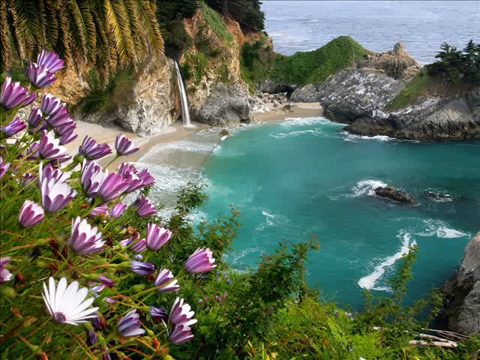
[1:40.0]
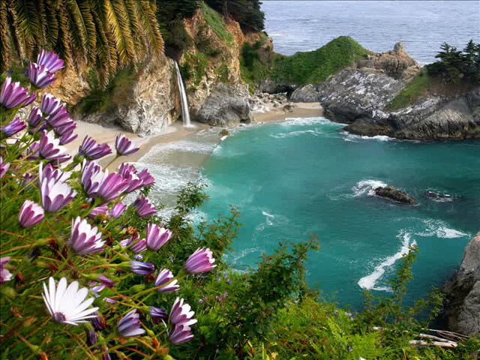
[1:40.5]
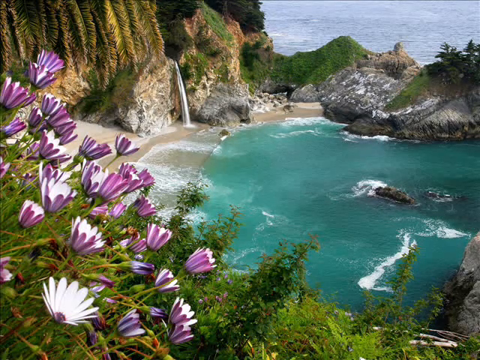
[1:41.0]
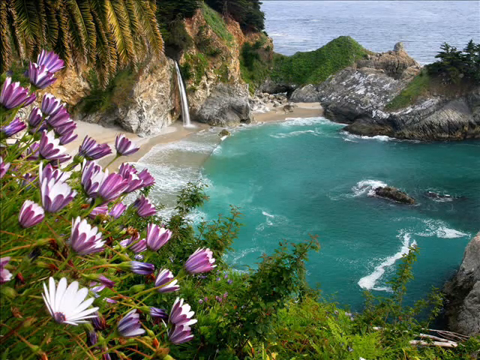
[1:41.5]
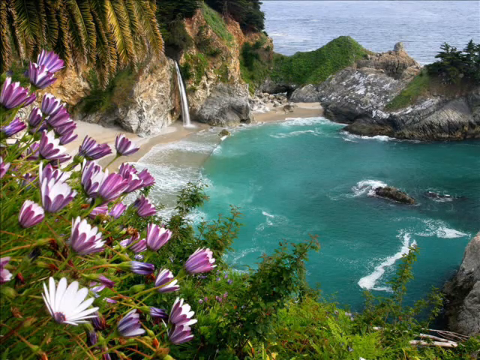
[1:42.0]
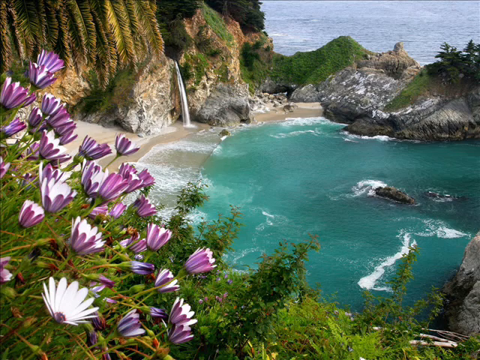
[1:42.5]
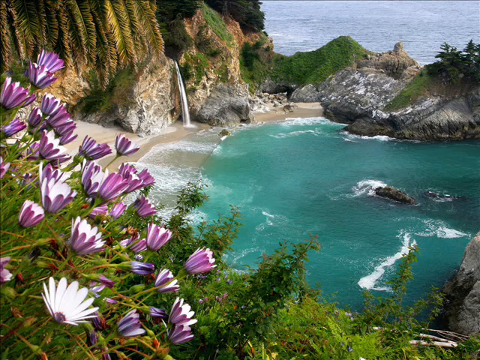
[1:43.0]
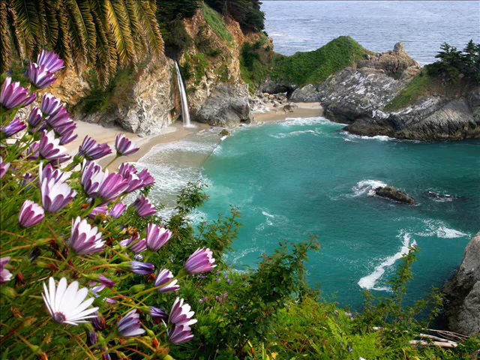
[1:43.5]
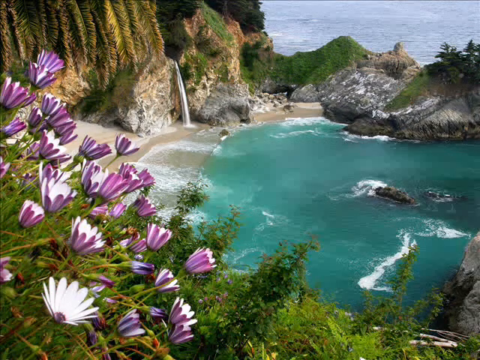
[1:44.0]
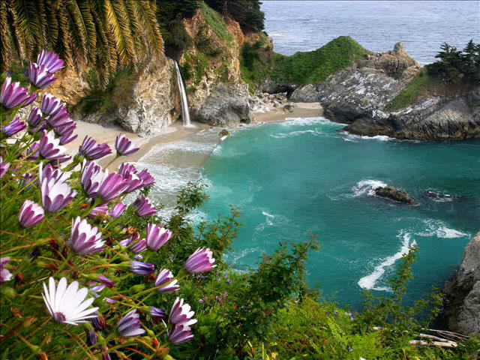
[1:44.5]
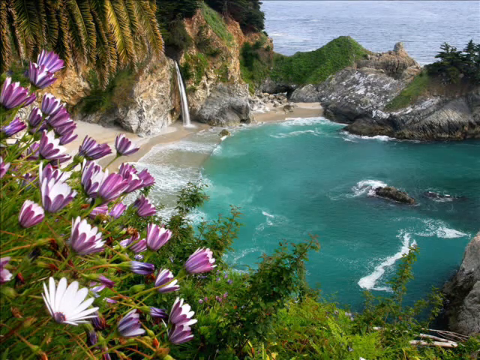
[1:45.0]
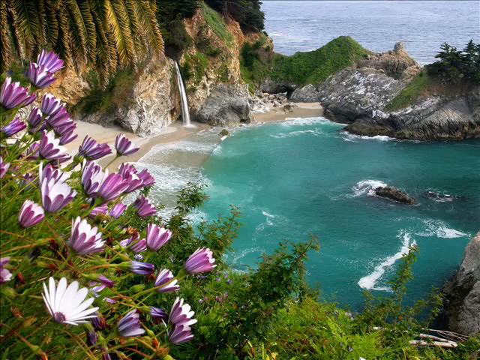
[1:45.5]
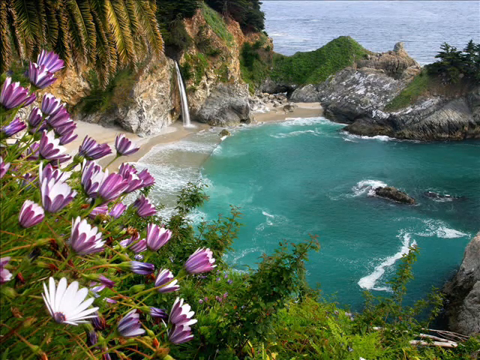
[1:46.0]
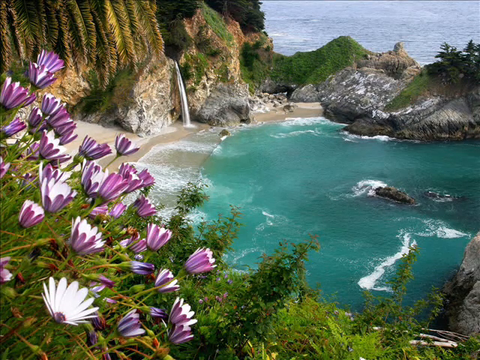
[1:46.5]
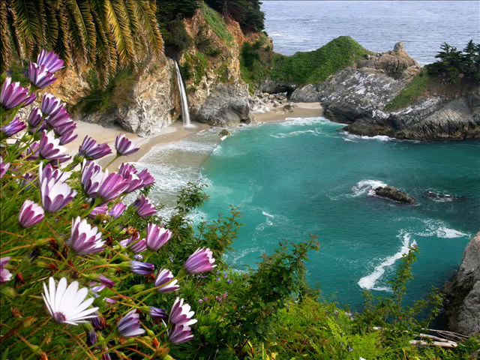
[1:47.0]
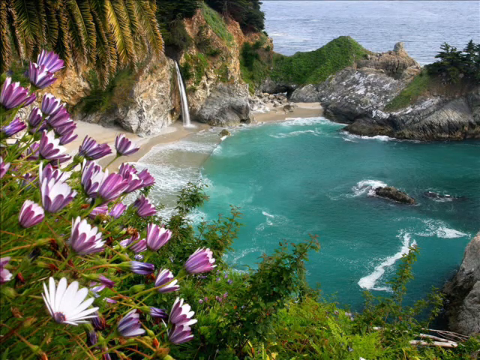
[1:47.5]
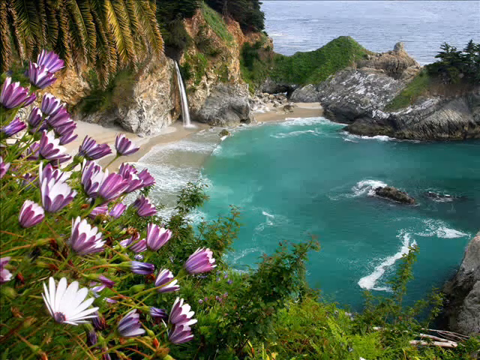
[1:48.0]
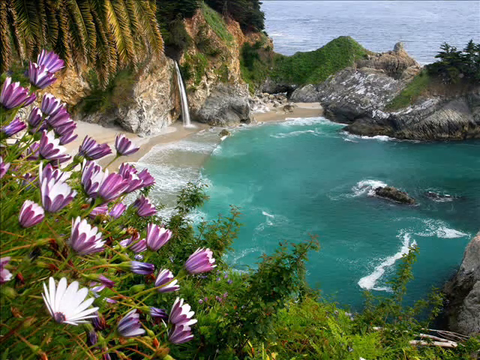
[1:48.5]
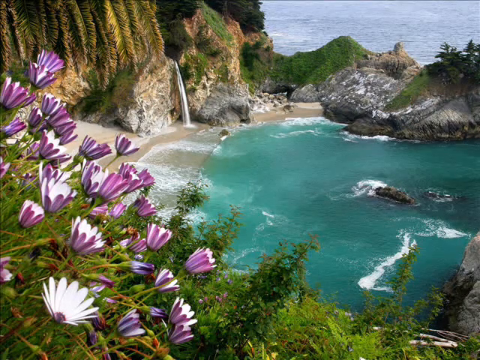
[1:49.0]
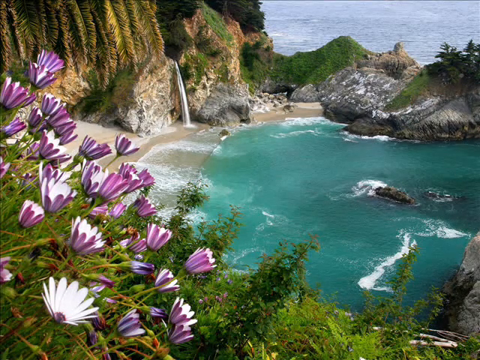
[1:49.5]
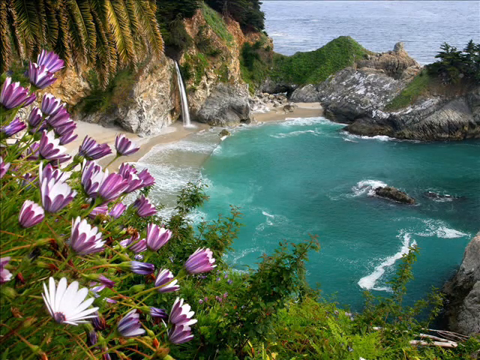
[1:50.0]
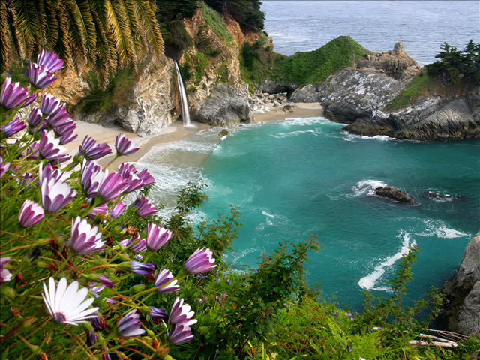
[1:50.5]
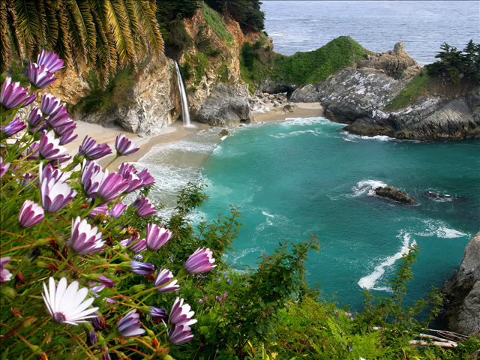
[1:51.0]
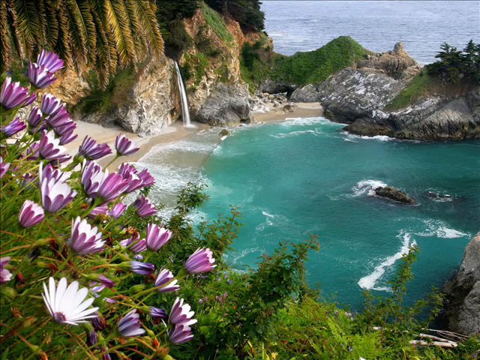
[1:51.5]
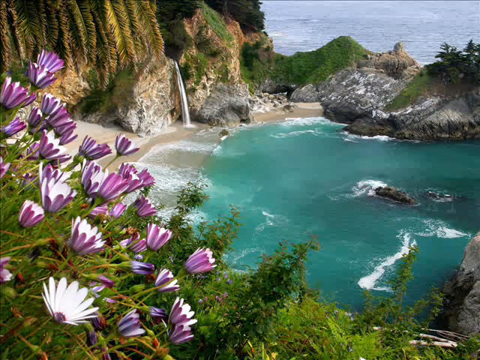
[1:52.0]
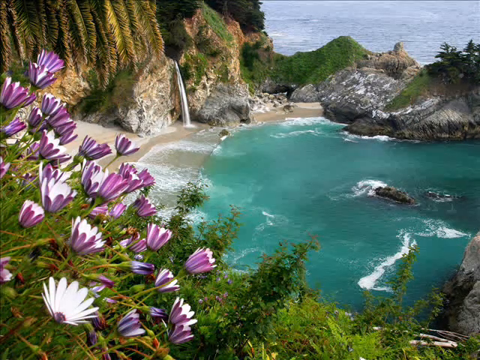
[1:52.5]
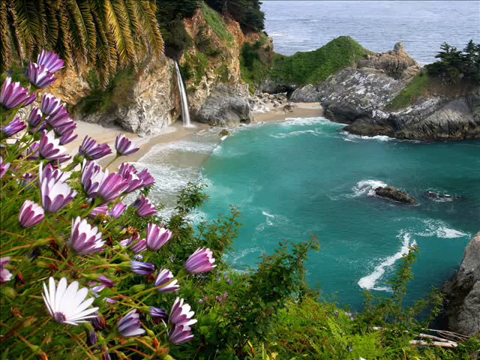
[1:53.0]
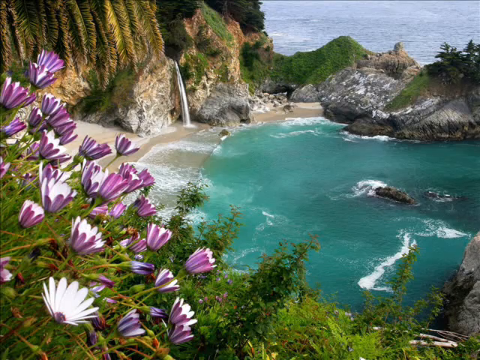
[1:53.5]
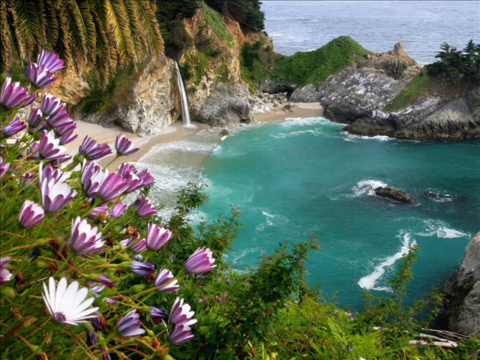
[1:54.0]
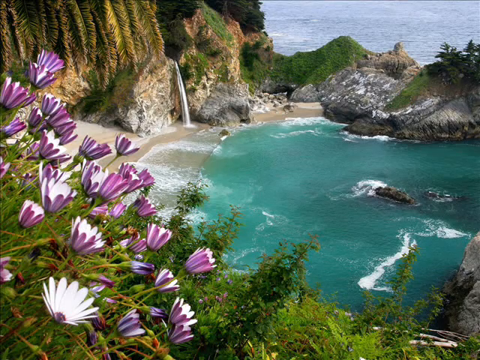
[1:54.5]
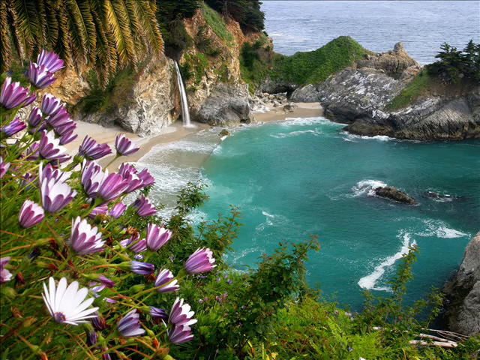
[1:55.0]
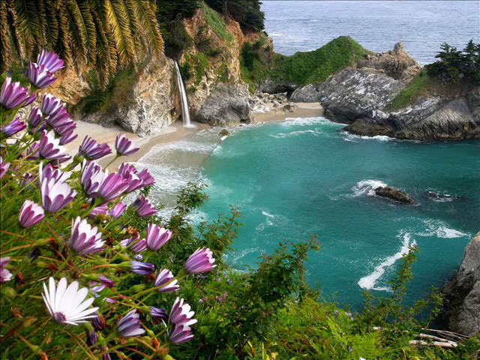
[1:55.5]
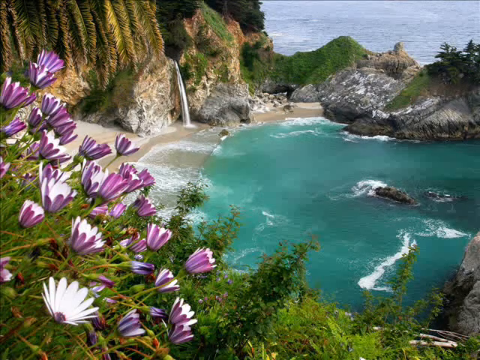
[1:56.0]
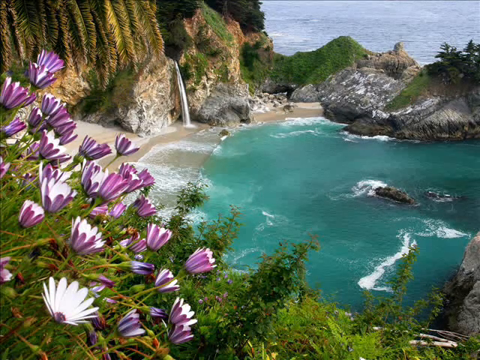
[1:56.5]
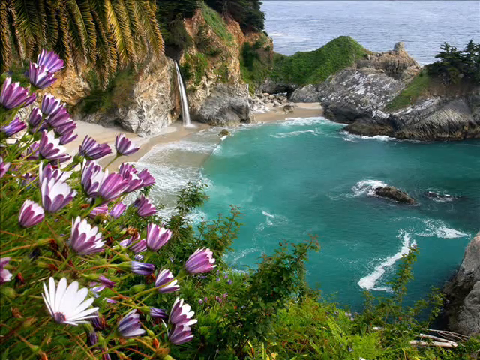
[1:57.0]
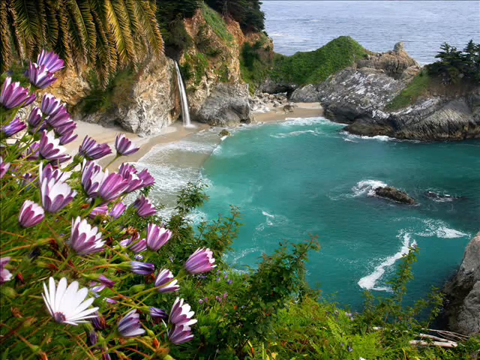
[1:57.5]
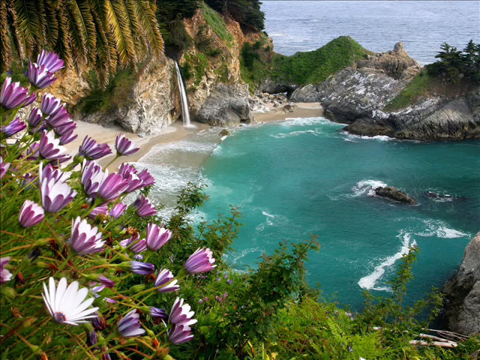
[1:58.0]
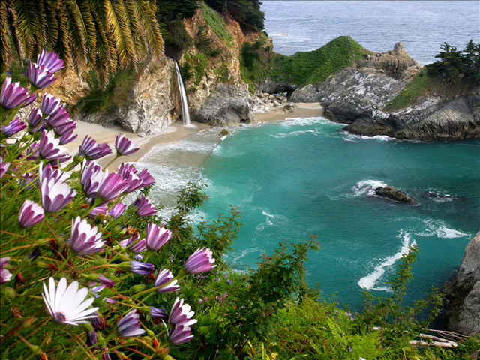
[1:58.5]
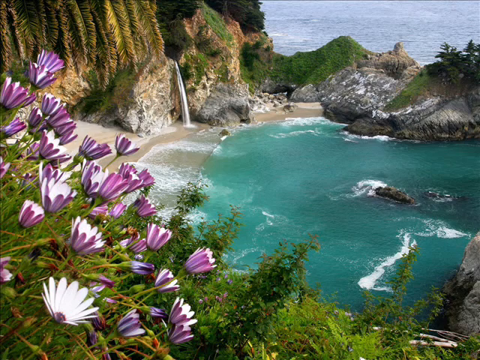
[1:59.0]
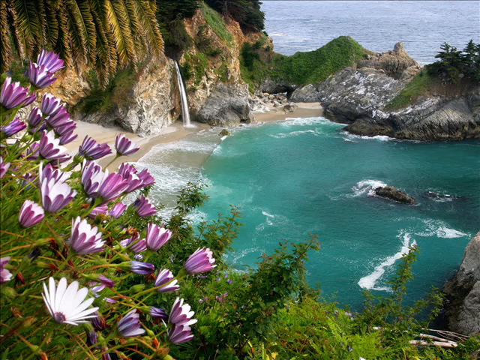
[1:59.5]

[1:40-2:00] Still image. Above the turtle-like rock structure is more rock: a generic, smooth rocky hill with a mix of white and black dotted rocks, where the white-covered rocks make the black ones look like dots. Further up, a small ledge seems to have formed above the top of these rocks, making it look like a table on top of the rock. Further back, lush green hills curve around the top side of the mountain as it goes around the side of the big cliff structure in the image. Where the cliff structure meets the lush green hill on that side, it is lush with a lot of green growing on it, with a somewhat more barren, sandy section in the middle.